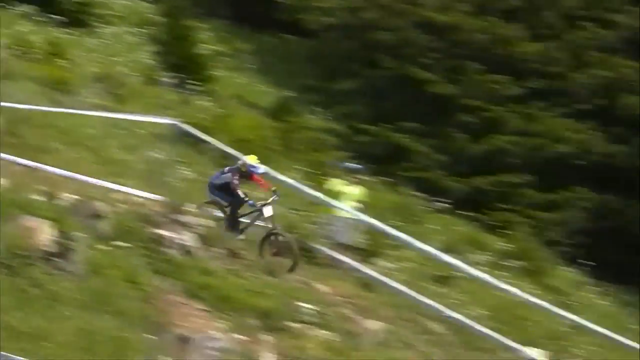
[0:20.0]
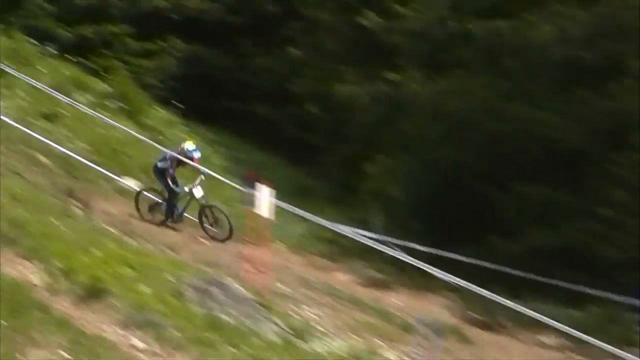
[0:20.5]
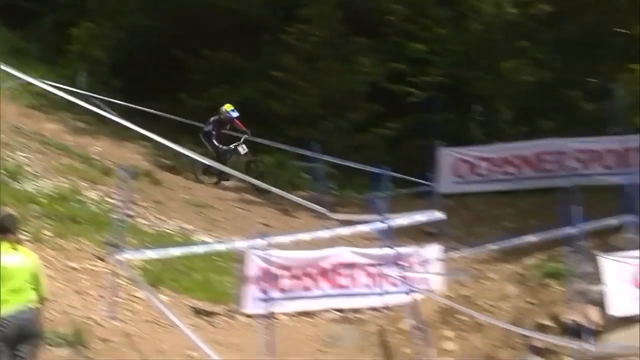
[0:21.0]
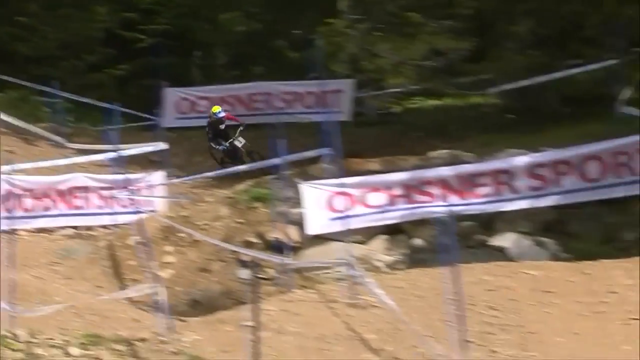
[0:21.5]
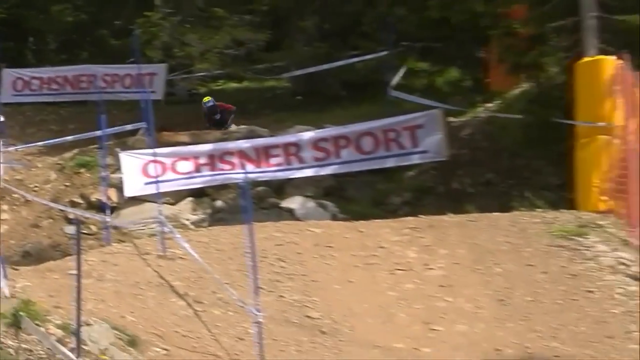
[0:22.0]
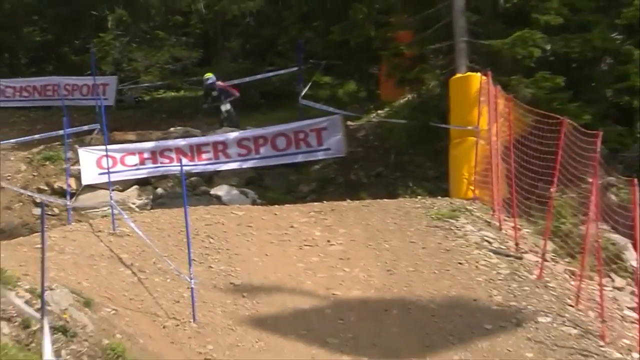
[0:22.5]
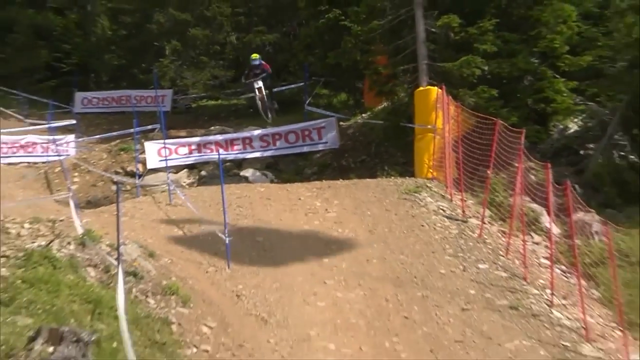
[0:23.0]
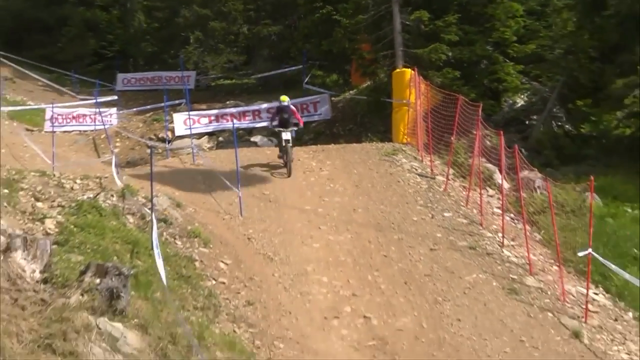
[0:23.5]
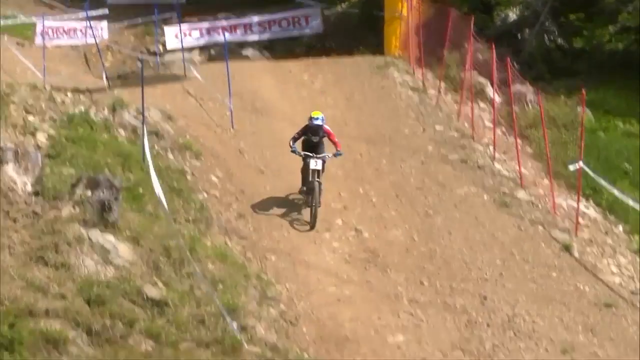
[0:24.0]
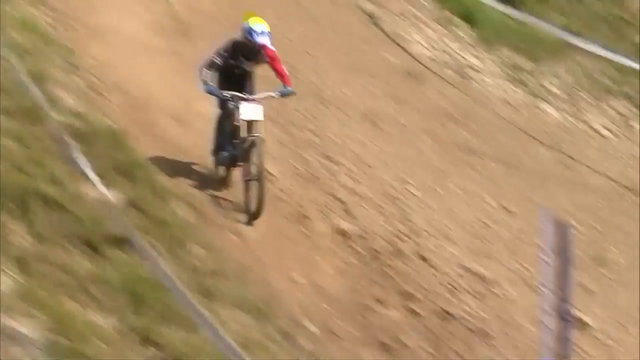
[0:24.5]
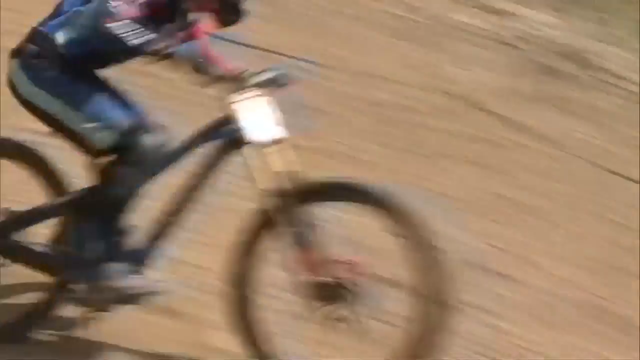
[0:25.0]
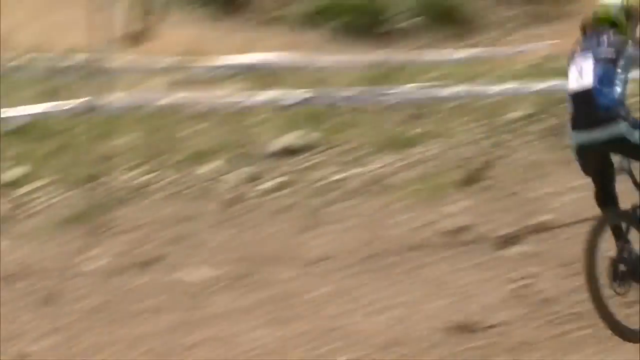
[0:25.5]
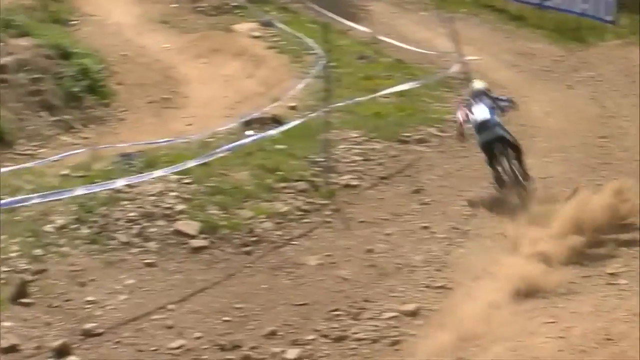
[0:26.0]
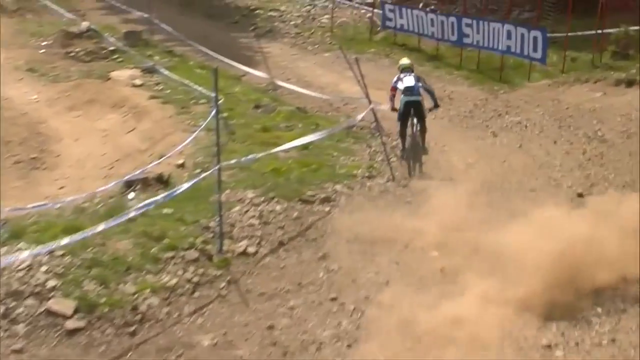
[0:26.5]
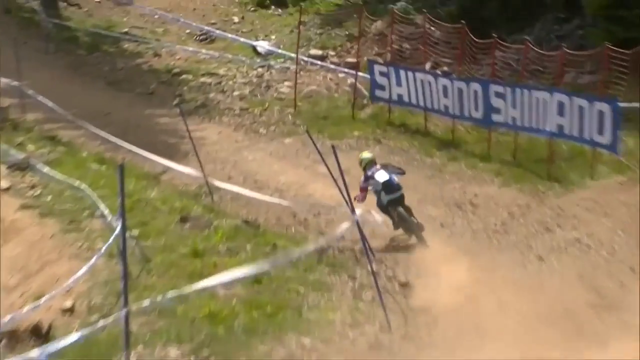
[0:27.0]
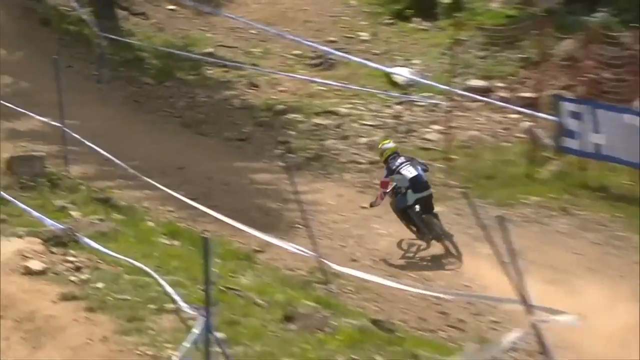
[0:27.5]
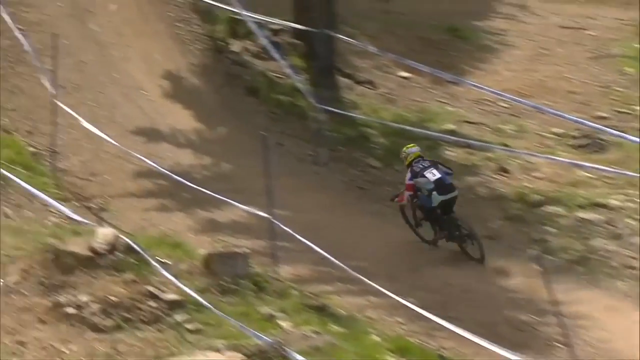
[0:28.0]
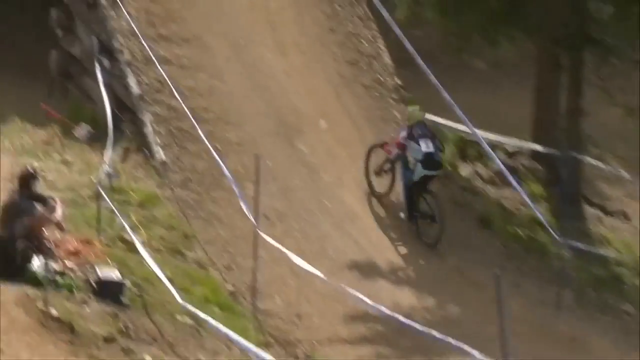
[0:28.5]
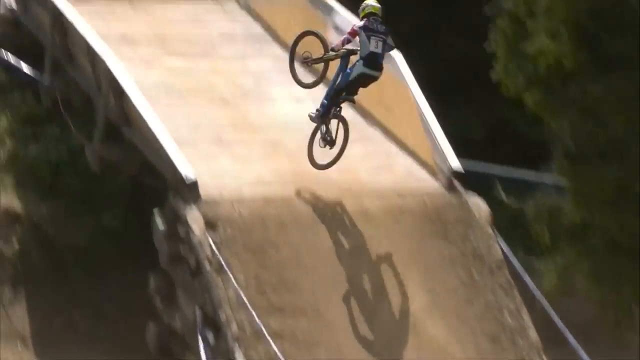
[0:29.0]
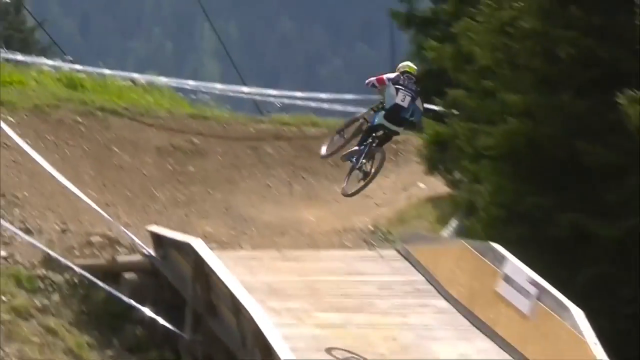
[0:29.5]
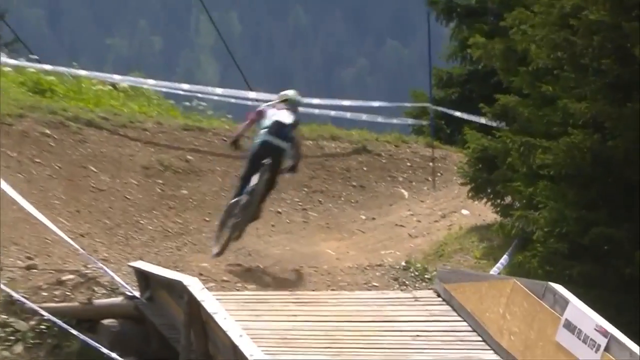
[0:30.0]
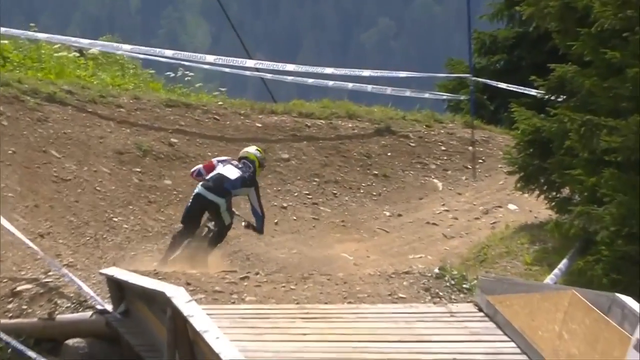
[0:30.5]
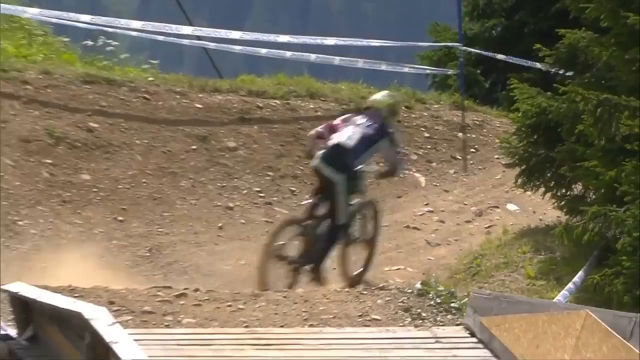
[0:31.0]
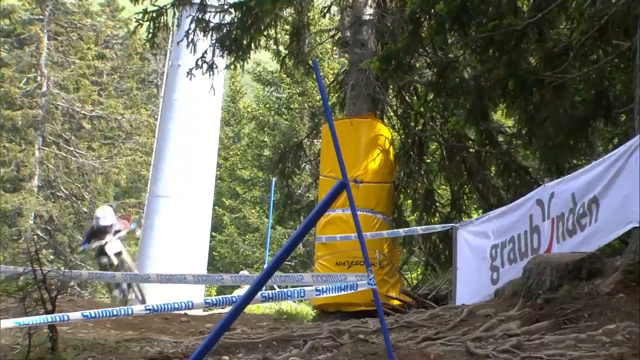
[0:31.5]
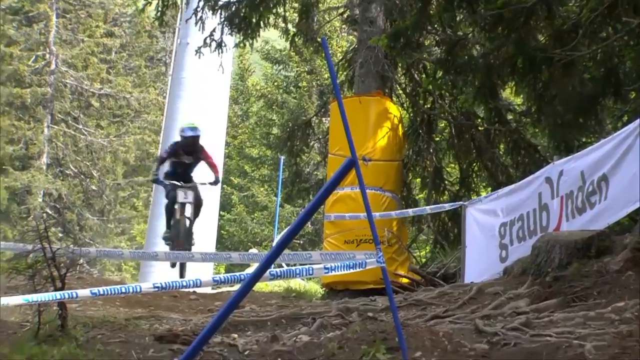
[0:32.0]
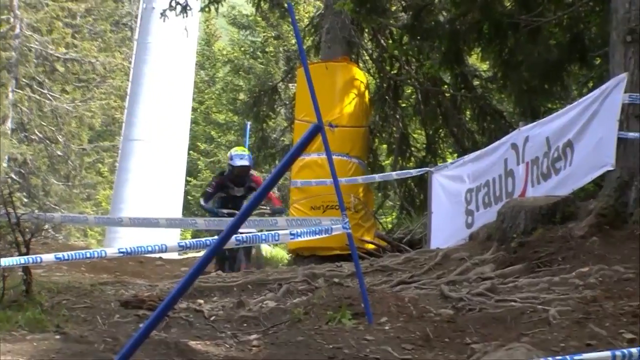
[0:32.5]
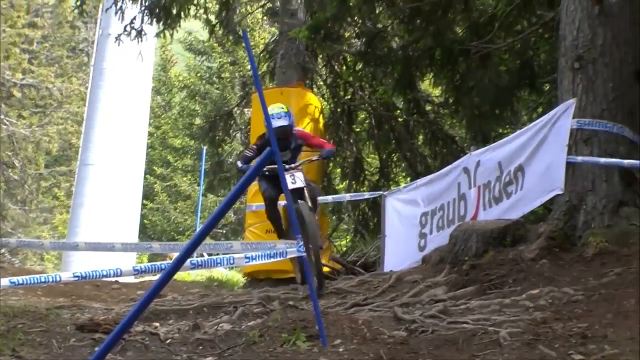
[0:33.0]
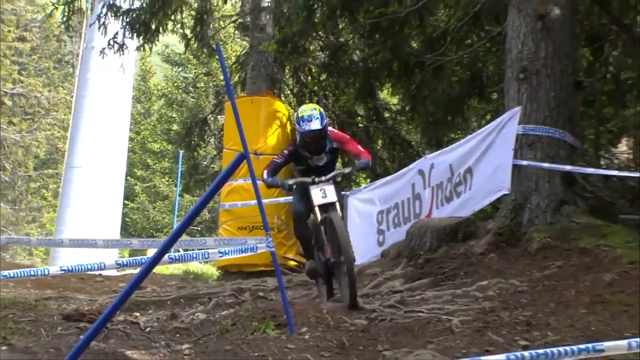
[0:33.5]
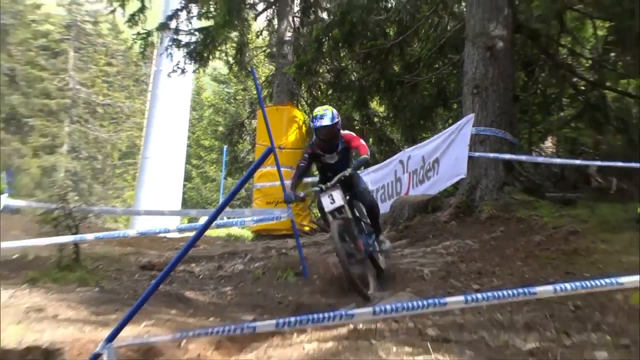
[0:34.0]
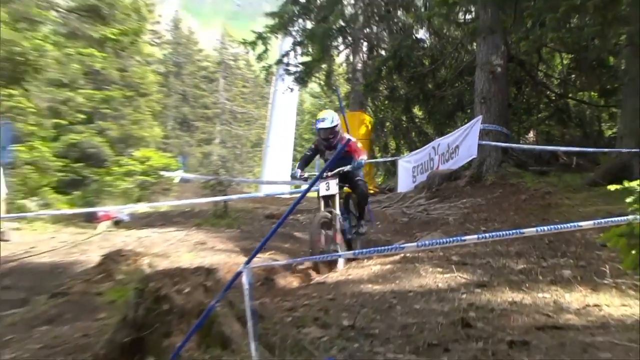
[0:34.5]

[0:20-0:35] The biker continues down the winding dirt path, which is marked on either side with white tape. He reaches a ramp, flies over an Ochsner sport sign, and lands on the dirt path, kicking up a bunch of dust. He continues along the winding path to another ramp that catapults him into the air, then lands safely and keeps going. It looks like he might lose some control. He races over some tree roots. There don't appear to be any people along the sides of the path on this stretch.